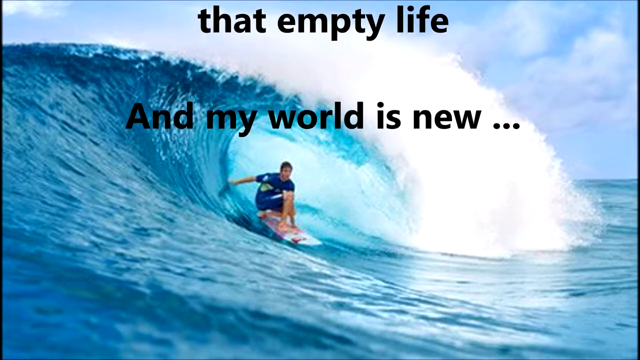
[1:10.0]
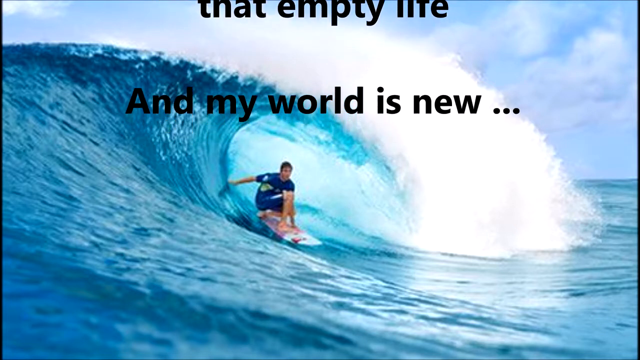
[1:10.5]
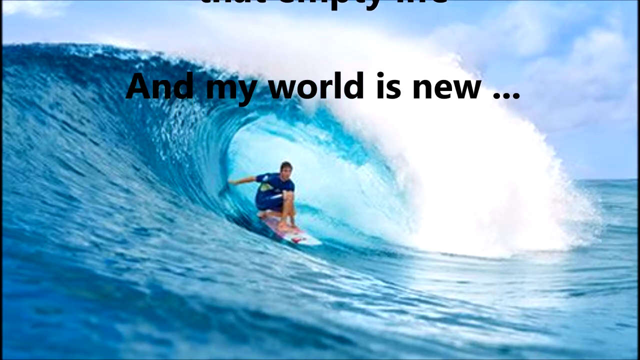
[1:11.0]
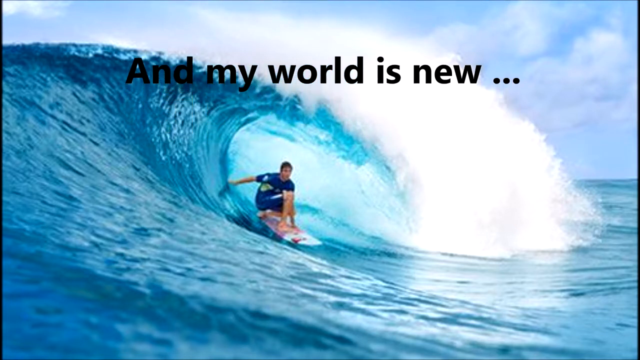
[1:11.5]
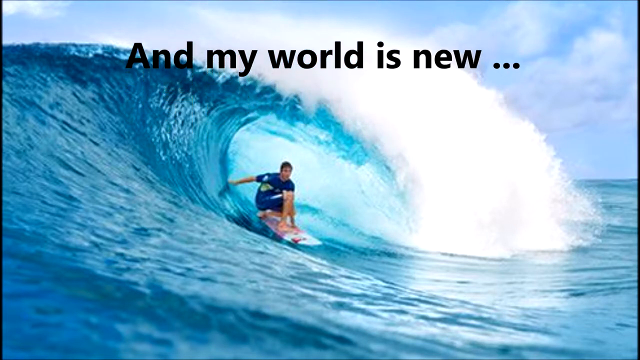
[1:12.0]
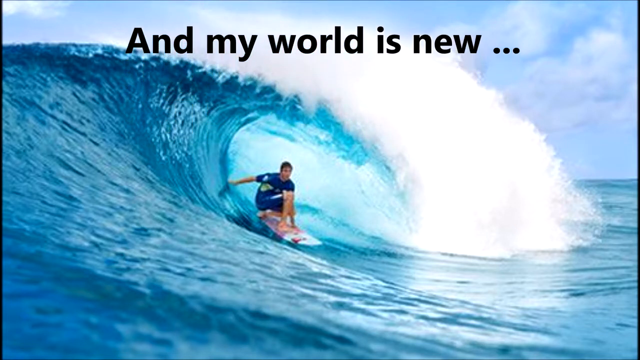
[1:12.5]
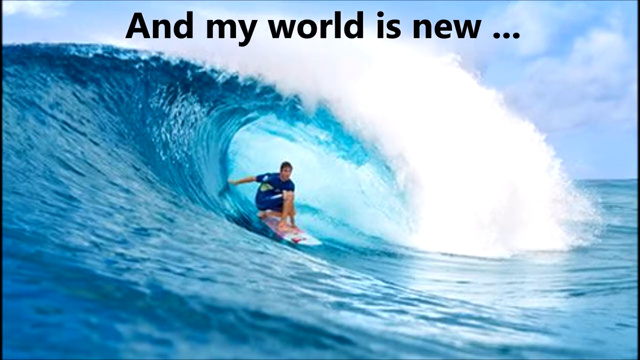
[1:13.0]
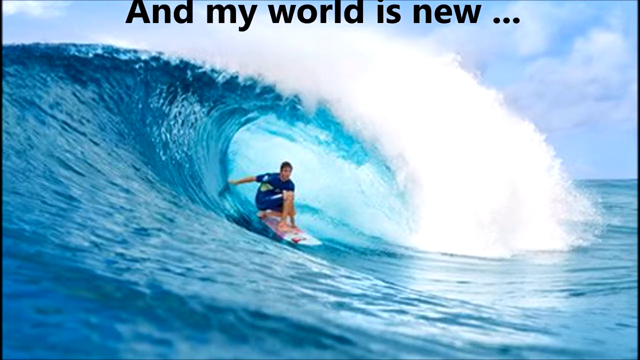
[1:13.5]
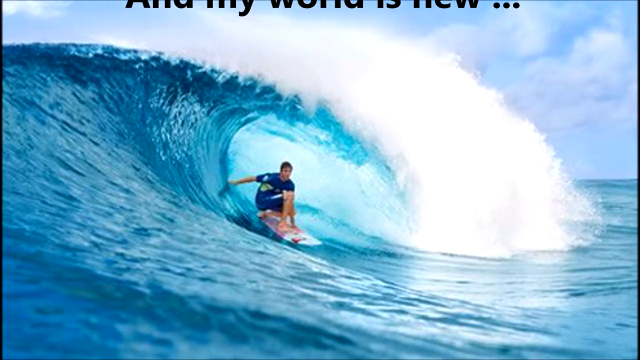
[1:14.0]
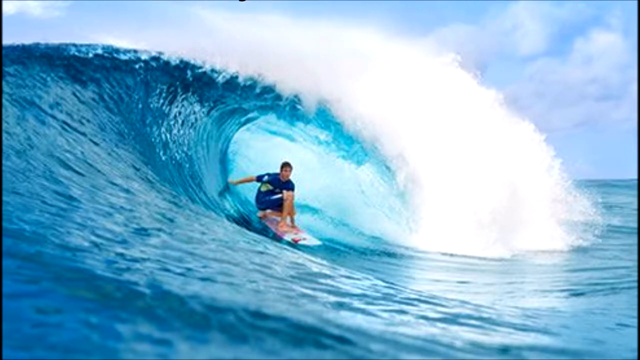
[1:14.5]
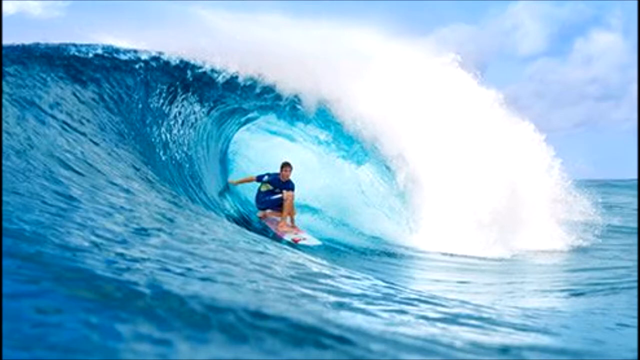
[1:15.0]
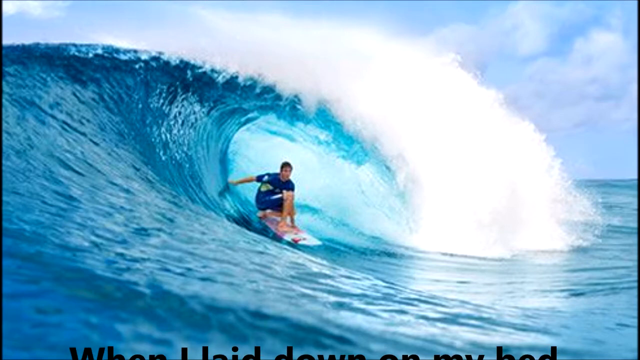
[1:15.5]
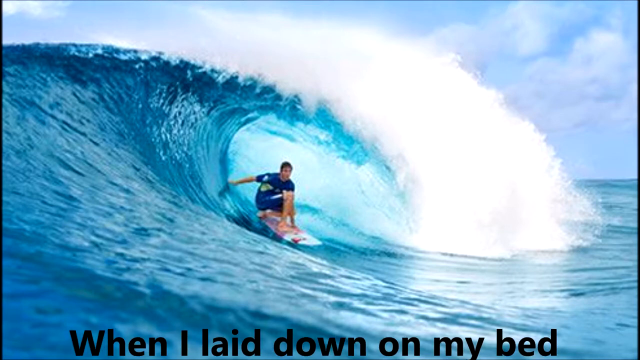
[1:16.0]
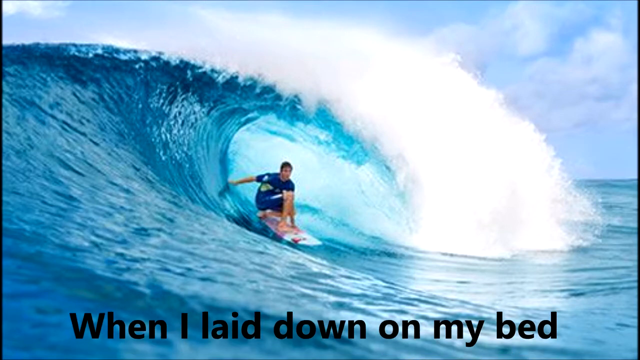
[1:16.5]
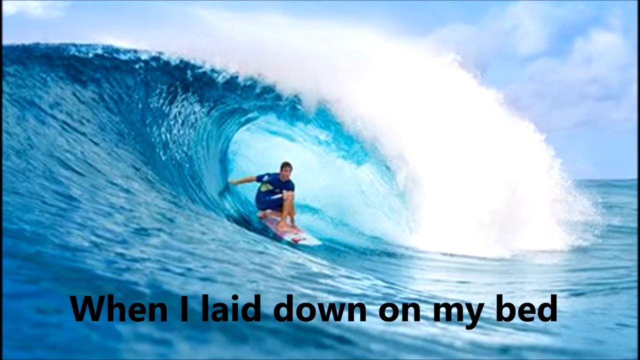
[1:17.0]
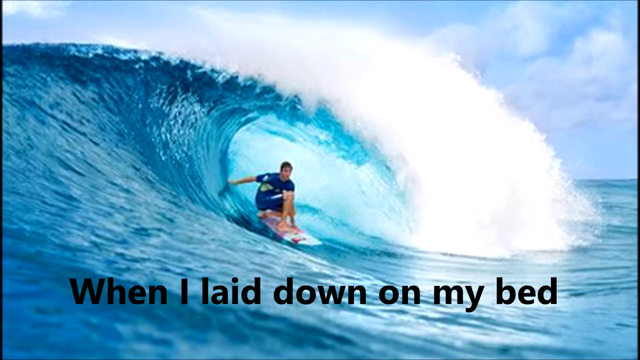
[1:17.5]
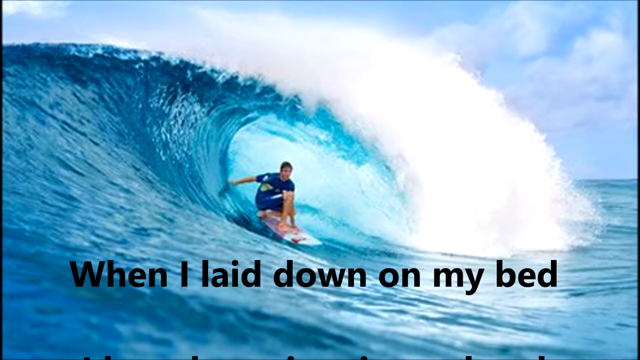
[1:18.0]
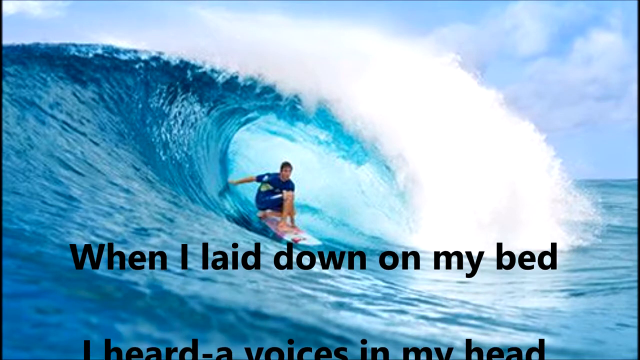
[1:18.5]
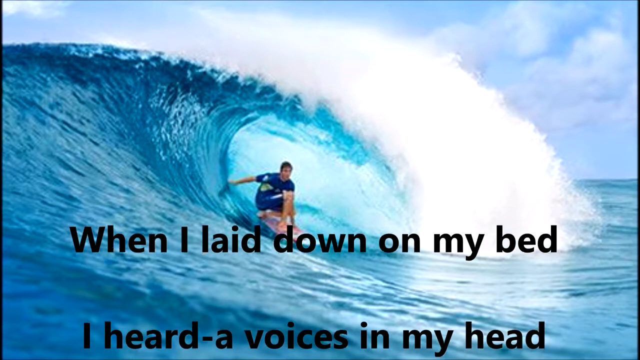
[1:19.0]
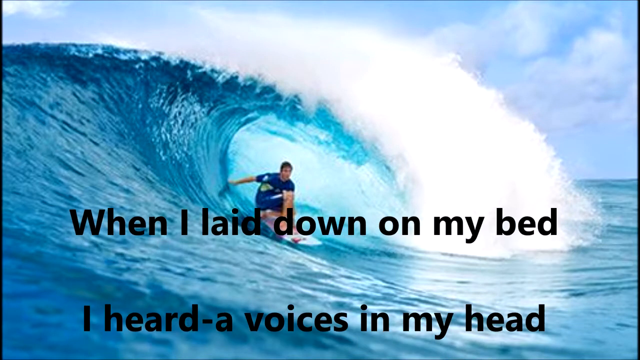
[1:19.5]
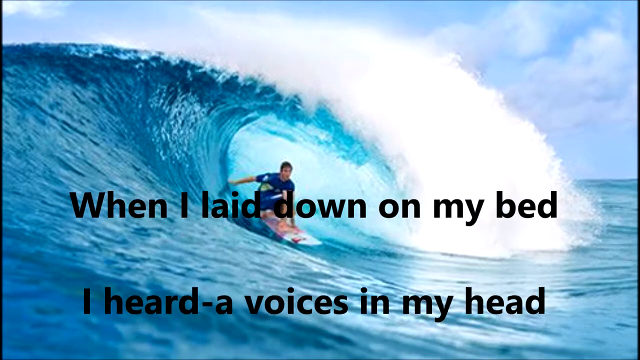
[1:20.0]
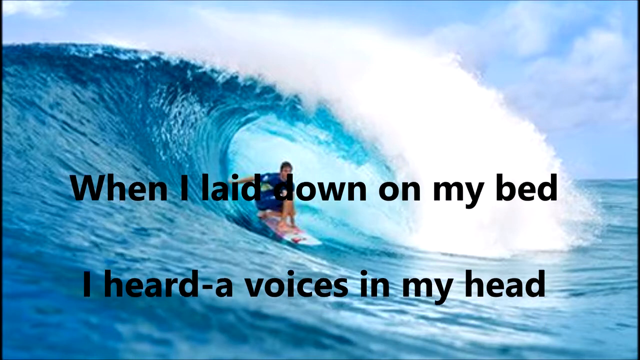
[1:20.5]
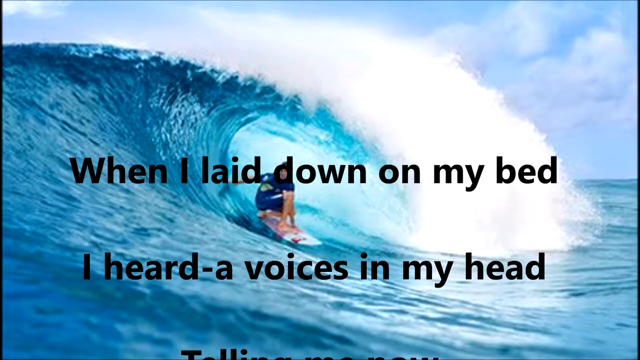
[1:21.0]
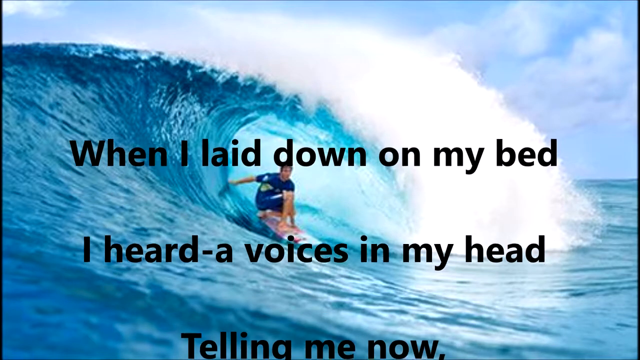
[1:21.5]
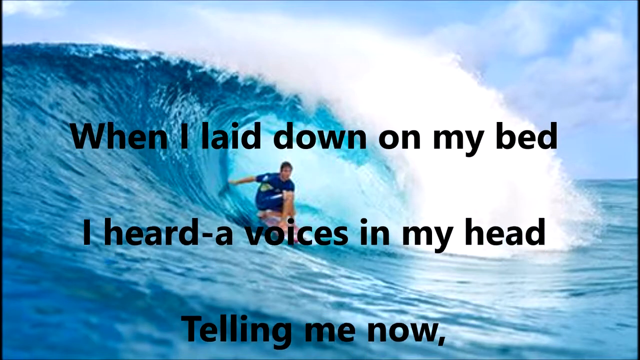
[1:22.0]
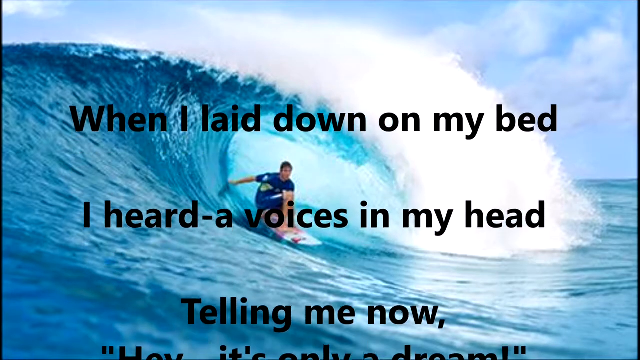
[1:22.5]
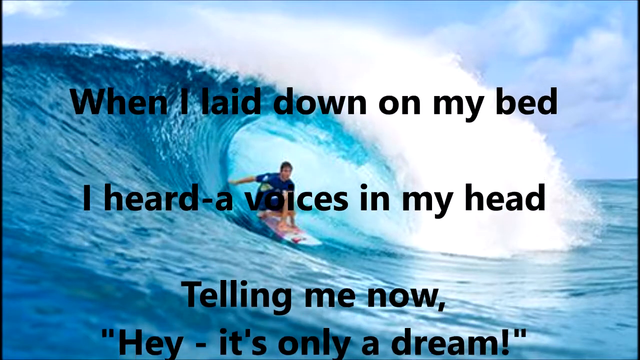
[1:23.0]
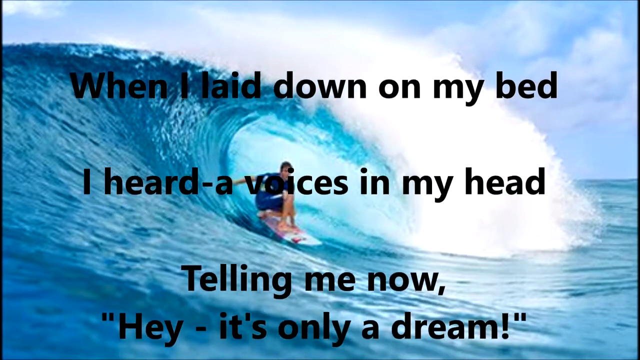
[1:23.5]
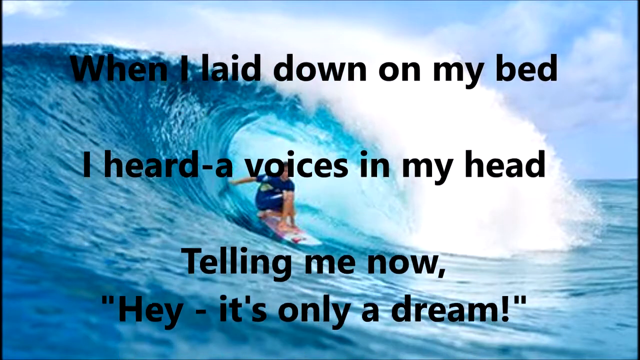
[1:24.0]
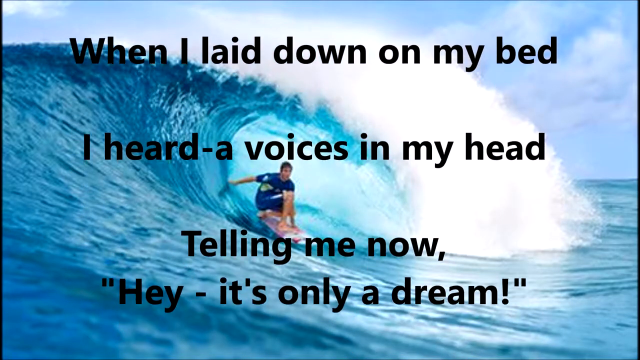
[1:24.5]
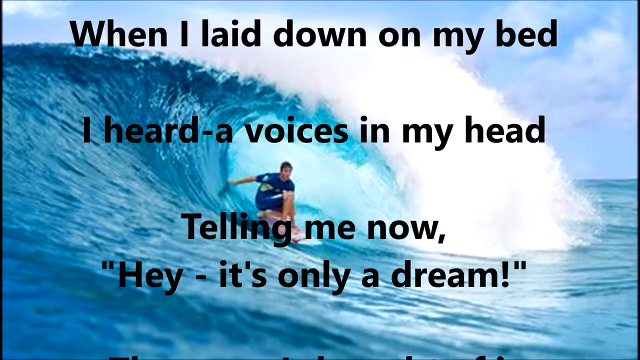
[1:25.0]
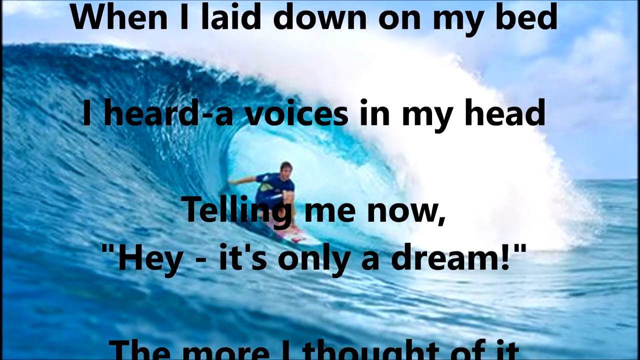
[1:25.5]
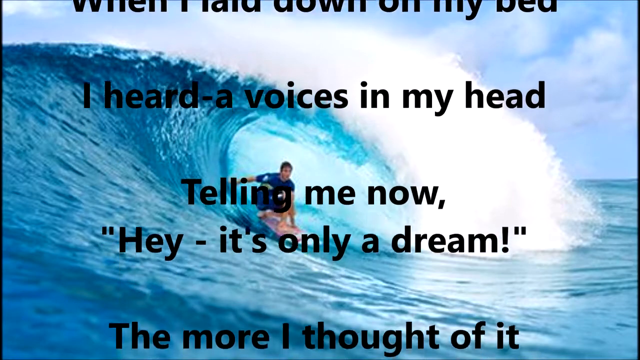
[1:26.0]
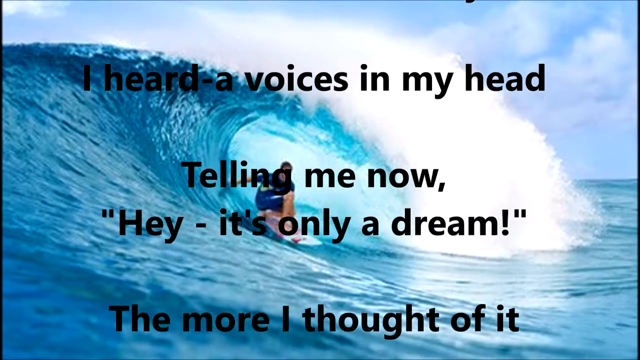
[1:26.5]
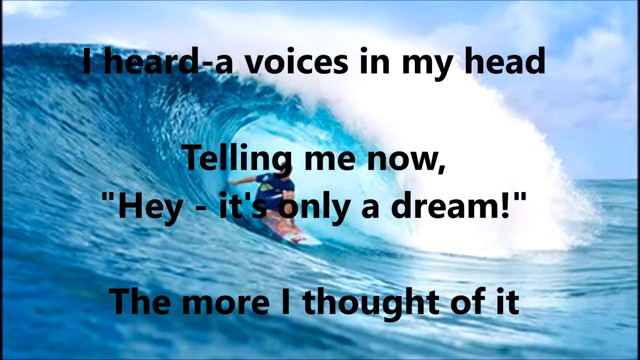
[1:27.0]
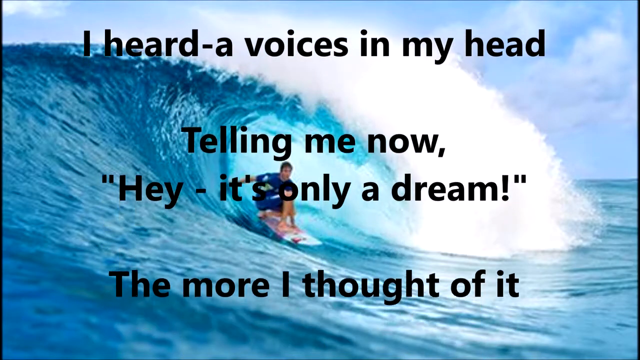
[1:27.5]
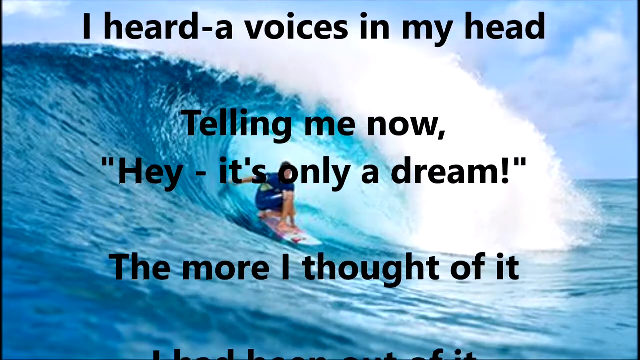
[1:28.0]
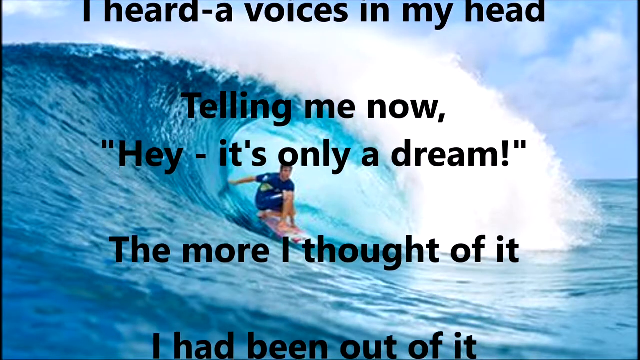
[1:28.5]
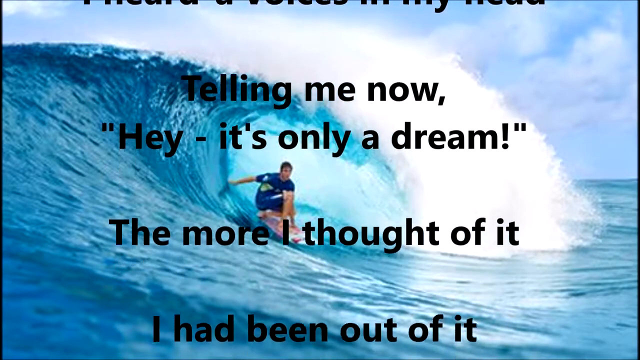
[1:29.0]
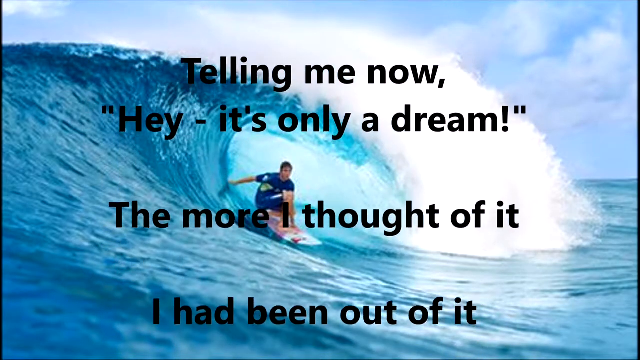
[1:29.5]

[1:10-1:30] After several seconds without text, a new line comes up from the bottom of the screen reading "When I laid down on my bed, I heard a voice in my head telling me now, "hey, it's only a dream." The more I thought of it, I had been out of it." The words "hey, it's only a dream" are in quotation marks. The lines are very short. The background image remains exactly the same as before.